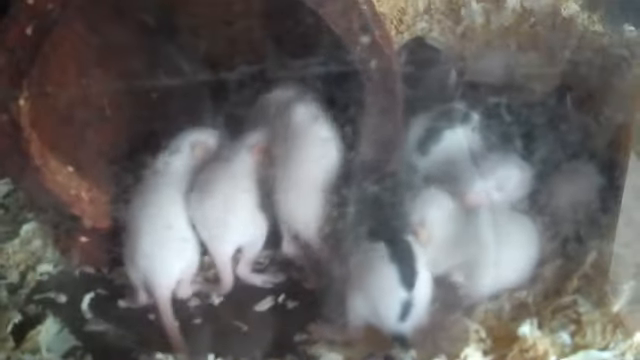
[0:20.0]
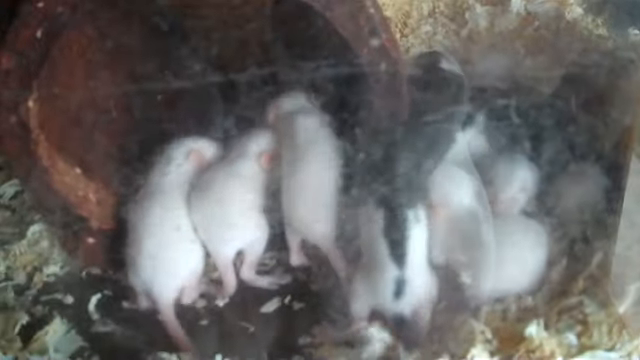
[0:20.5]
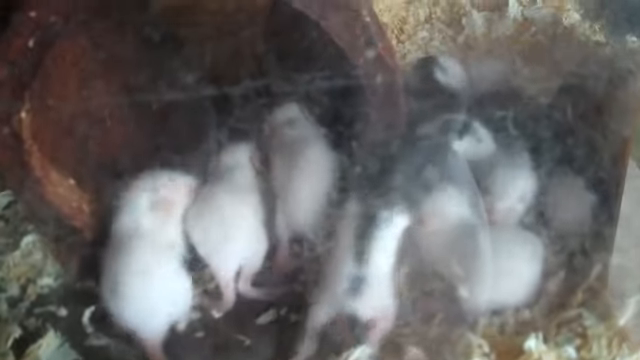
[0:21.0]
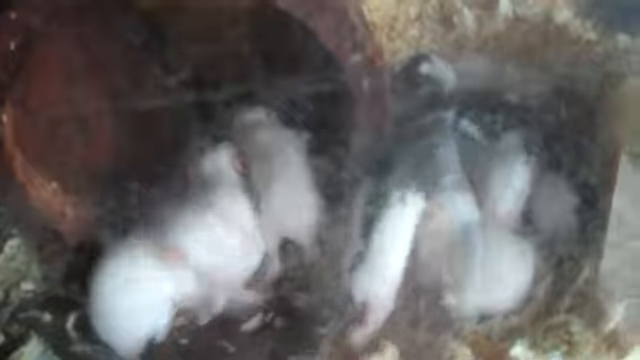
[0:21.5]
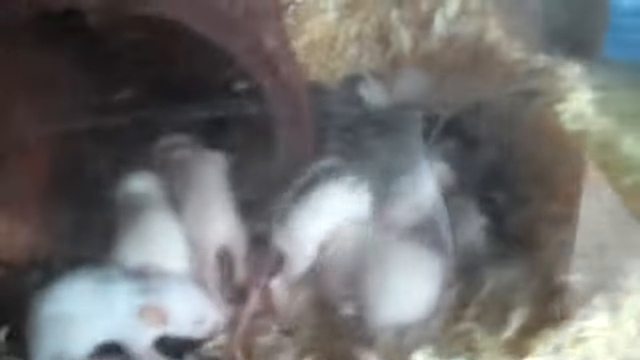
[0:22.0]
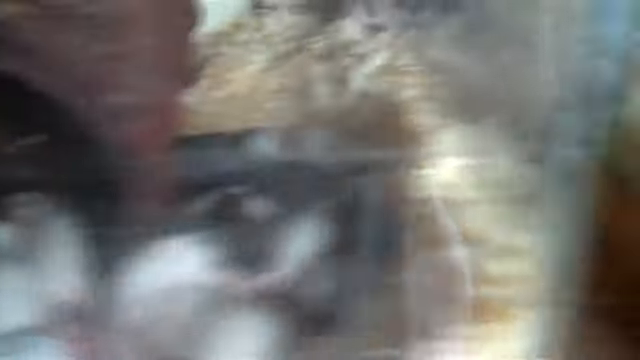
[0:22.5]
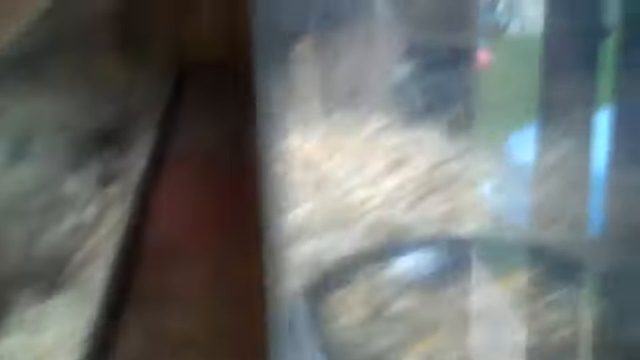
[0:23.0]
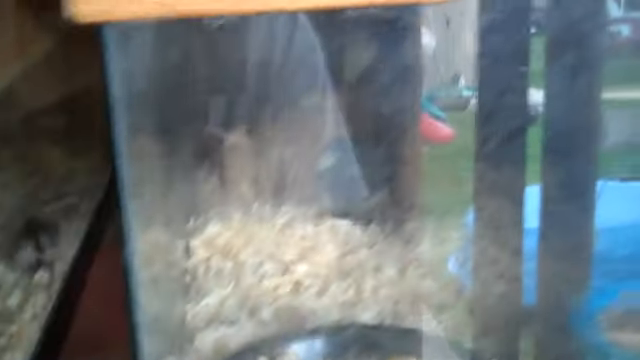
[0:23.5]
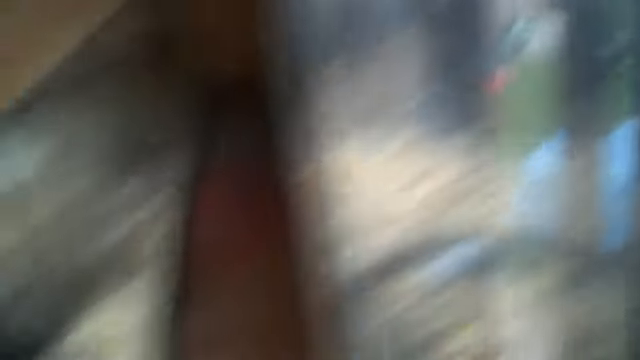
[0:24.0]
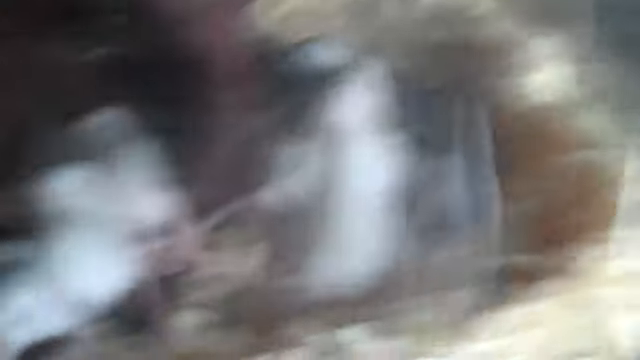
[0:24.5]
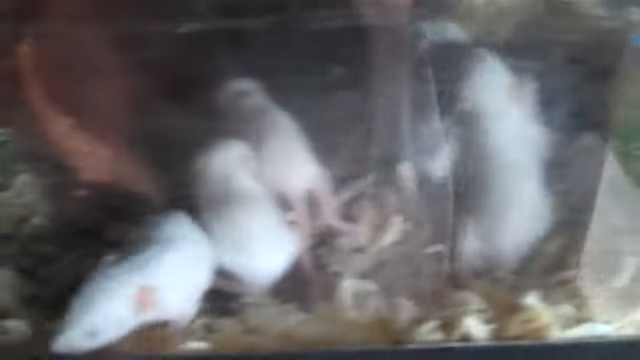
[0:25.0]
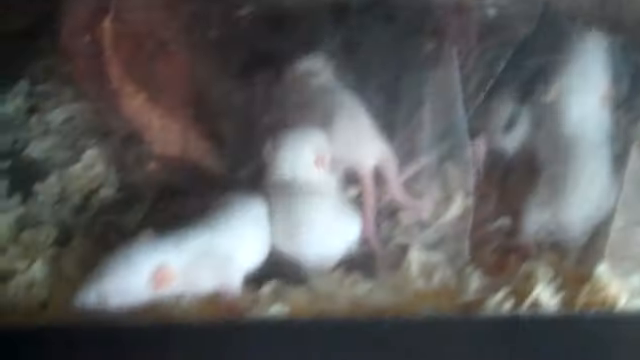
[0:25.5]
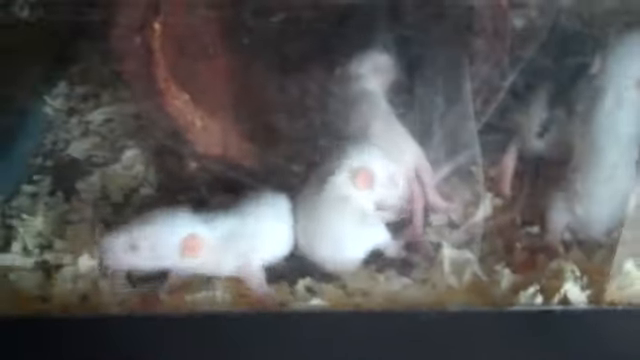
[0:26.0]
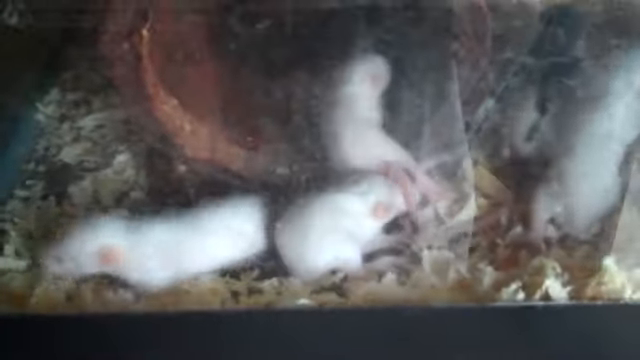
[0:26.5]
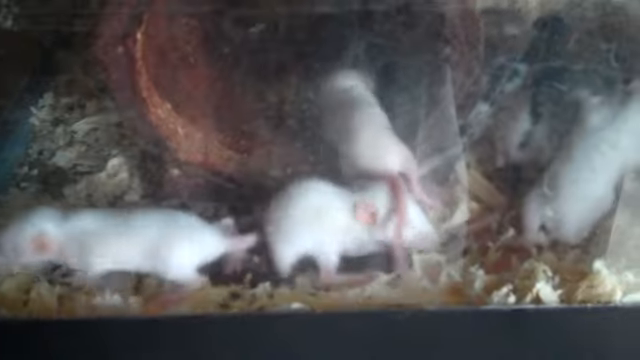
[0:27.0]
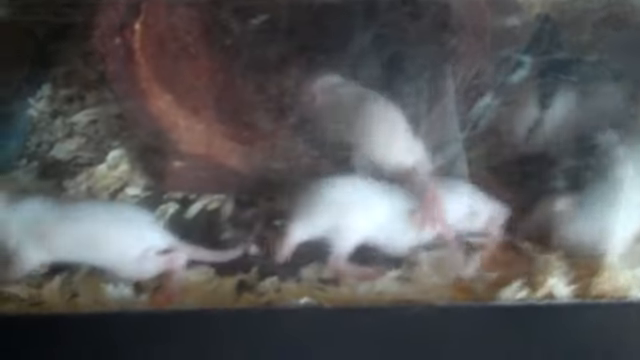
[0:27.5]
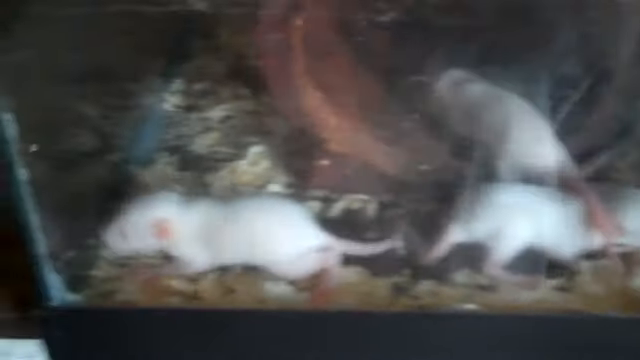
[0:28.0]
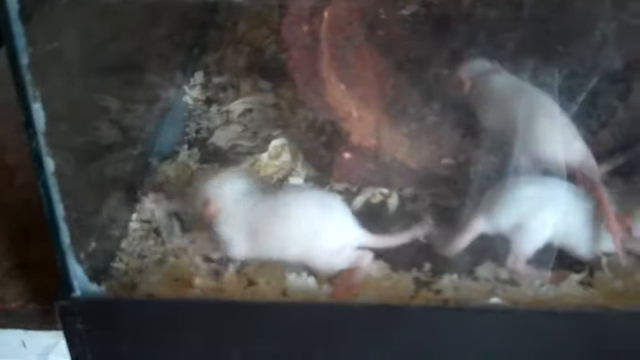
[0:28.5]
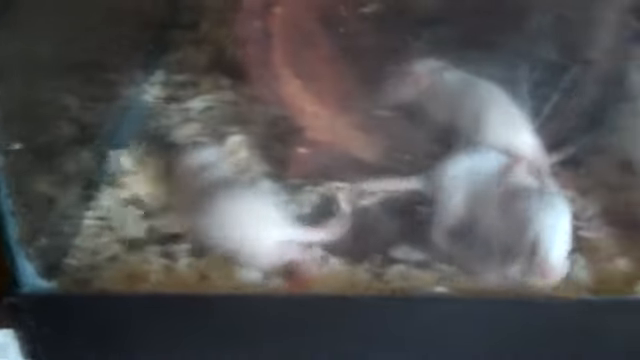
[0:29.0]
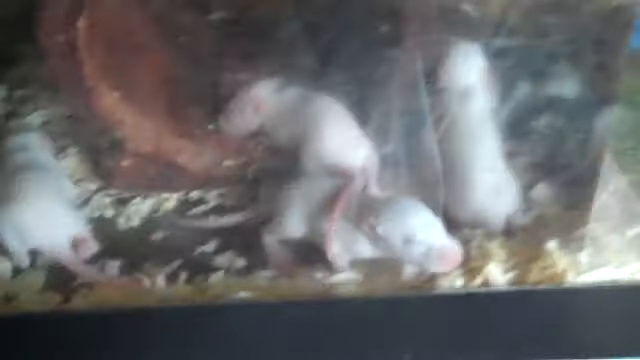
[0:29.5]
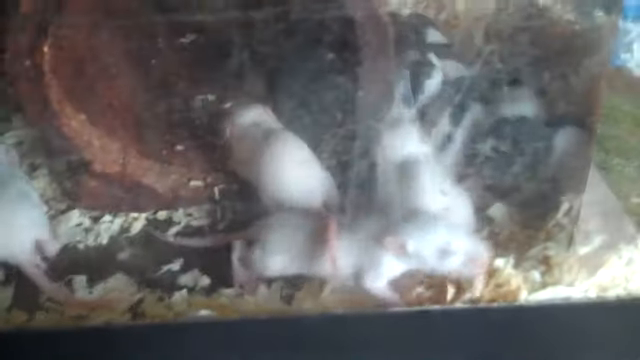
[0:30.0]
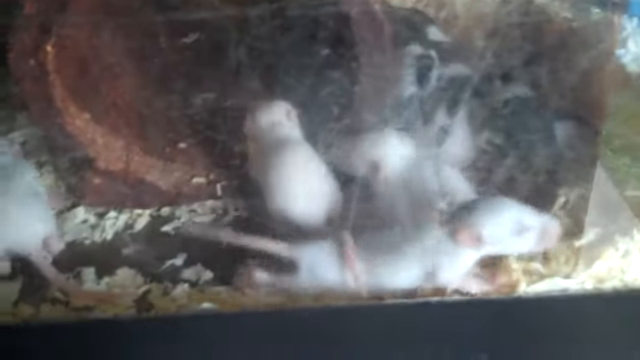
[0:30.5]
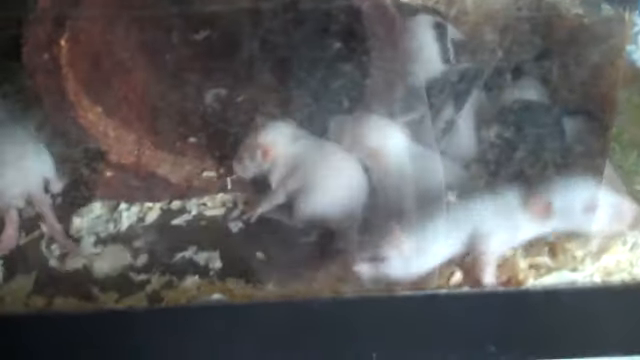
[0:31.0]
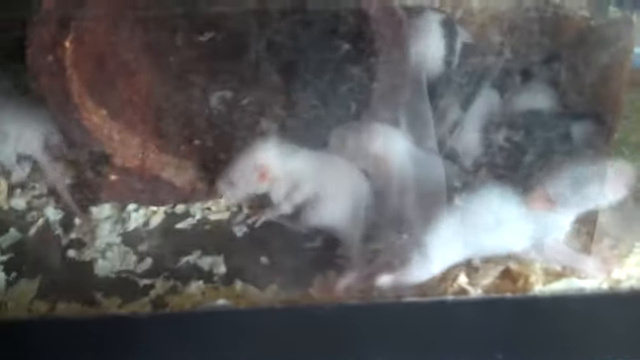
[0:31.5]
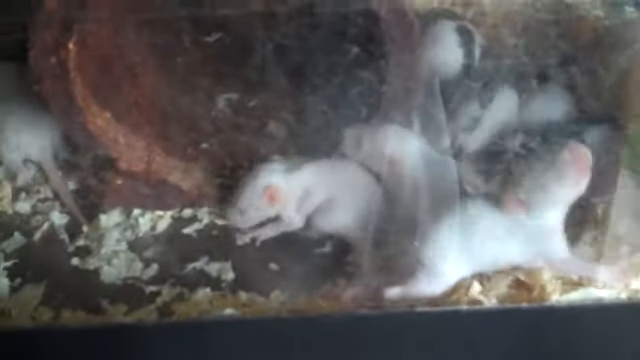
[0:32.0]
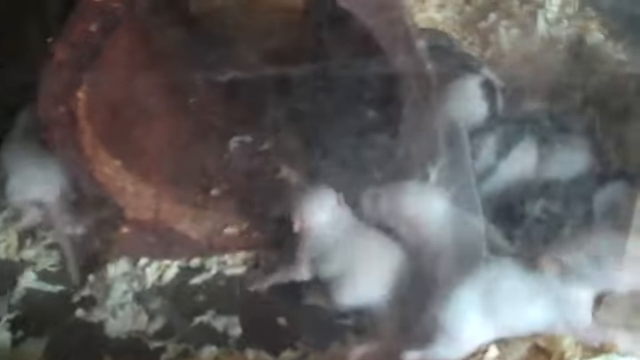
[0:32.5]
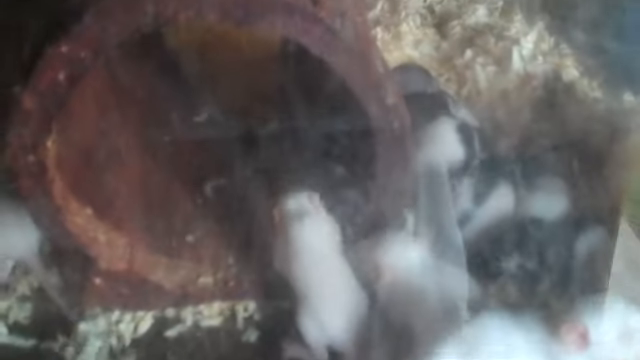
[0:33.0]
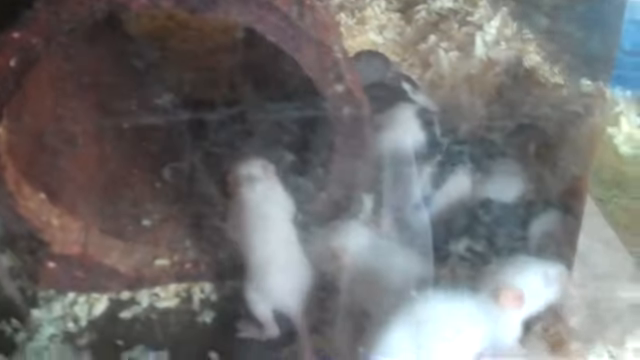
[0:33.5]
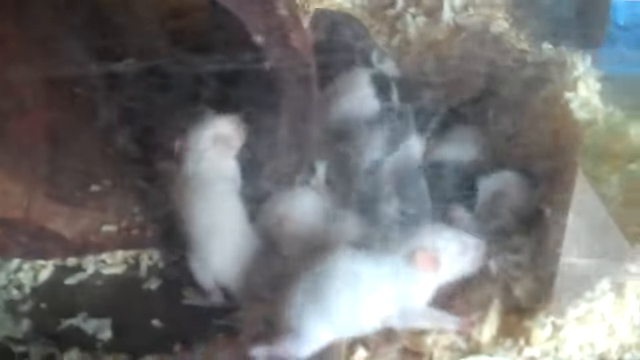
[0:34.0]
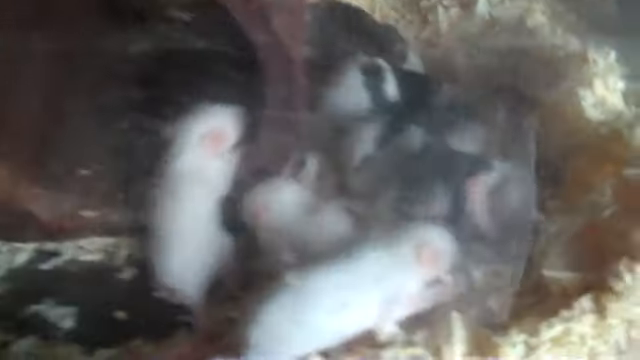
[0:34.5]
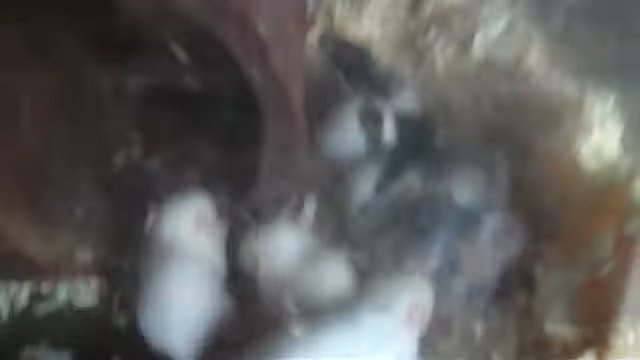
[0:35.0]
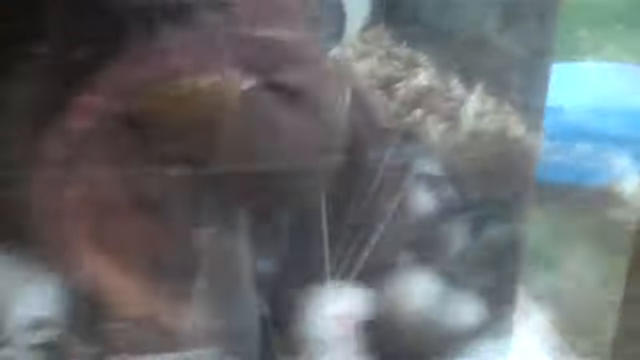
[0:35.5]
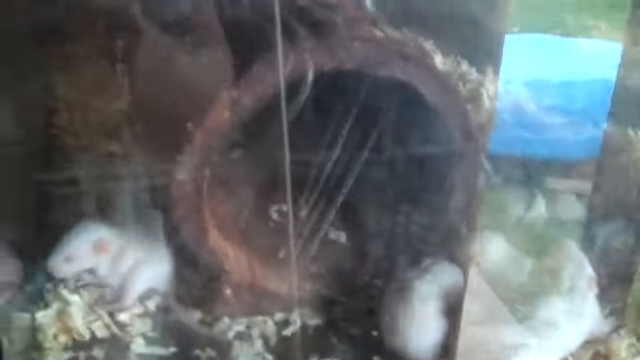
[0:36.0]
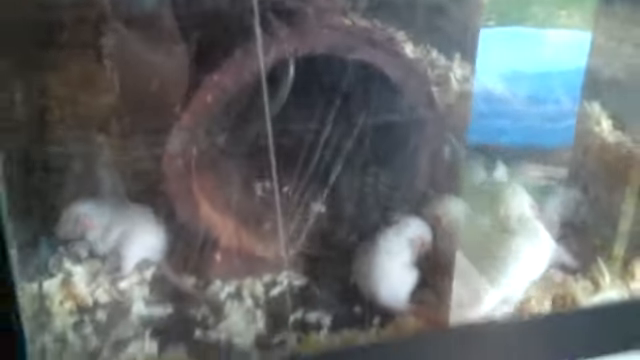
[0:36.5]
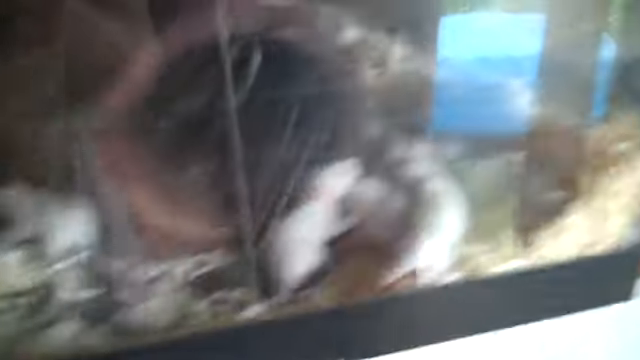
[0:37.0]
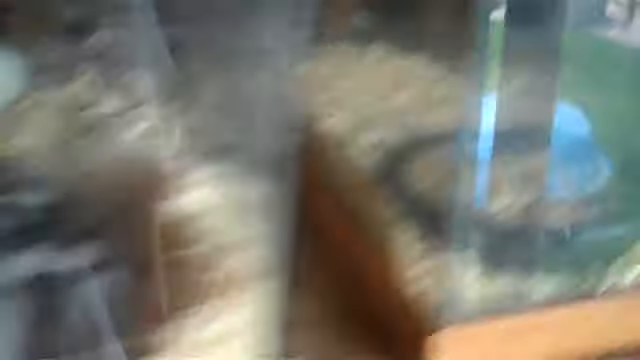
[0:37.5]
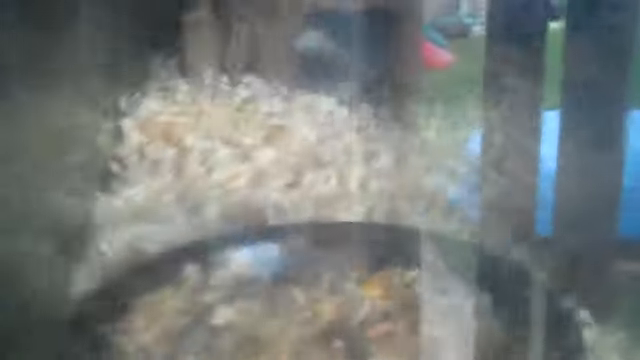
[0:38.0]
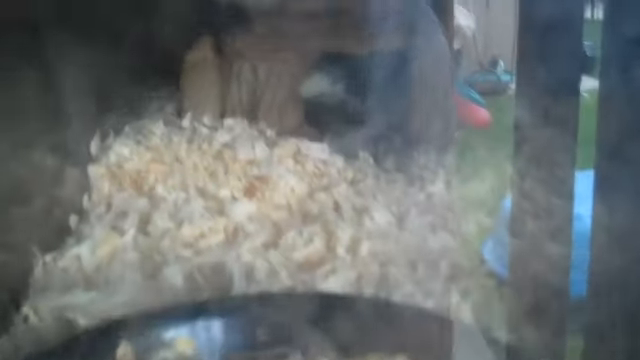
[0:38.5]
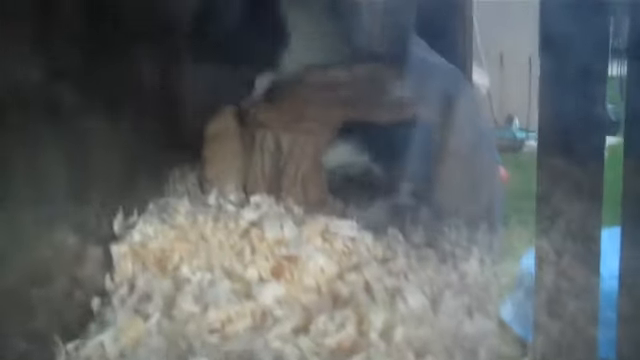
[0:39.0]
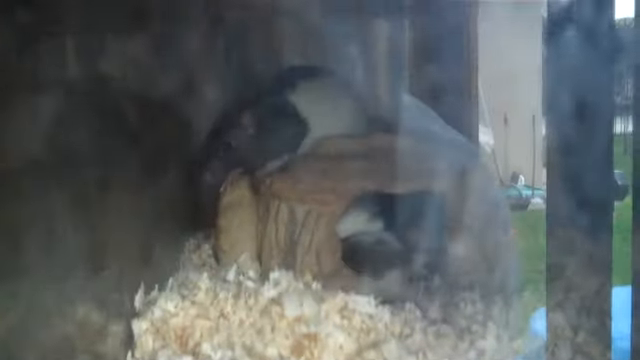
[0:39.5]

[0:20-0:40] A little rat with a very long tail, white in colour, is shown. The young appear to be kept in a glass enclosure with what looks like dry wood shaft on the floor. They scramble and move around one another; some are pure white and some are black. The camera moves around. What appears to be the mother stands on top of what looks like a brick while the little ones move around, mounting one another, possibly searching for food or for their mother's comfort.